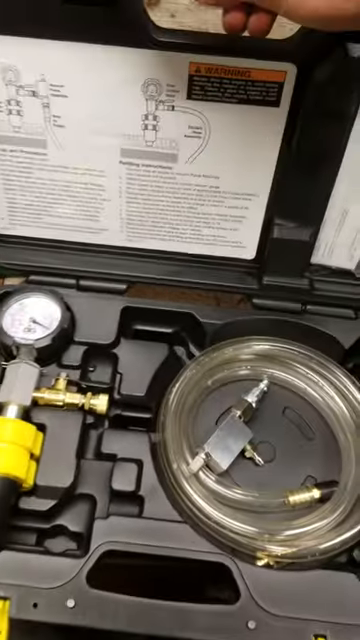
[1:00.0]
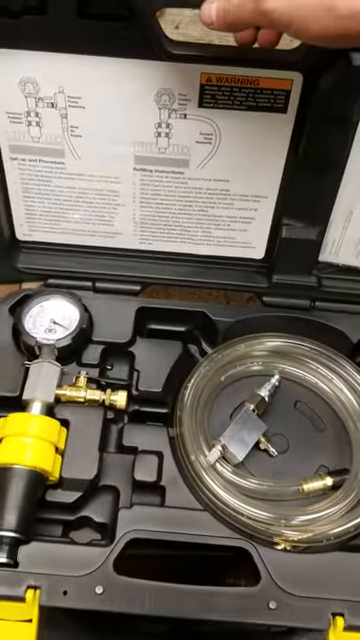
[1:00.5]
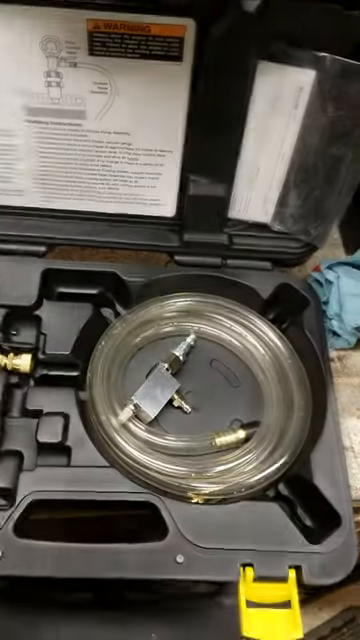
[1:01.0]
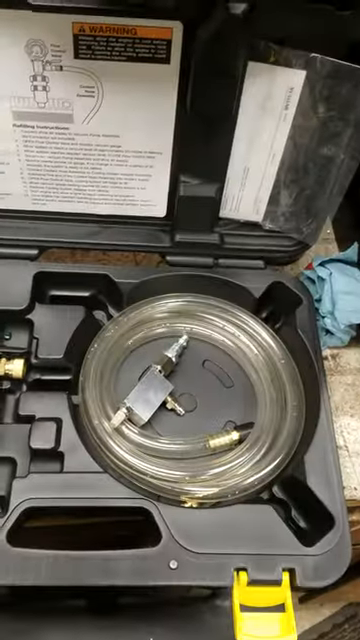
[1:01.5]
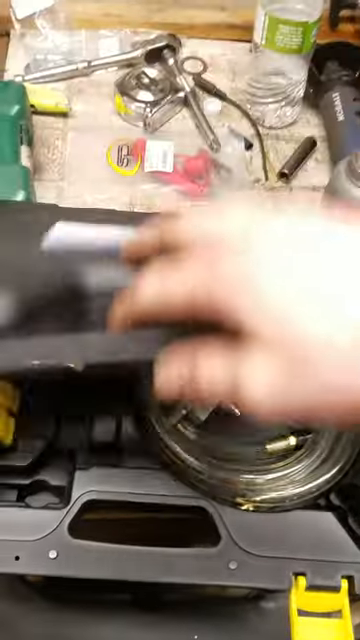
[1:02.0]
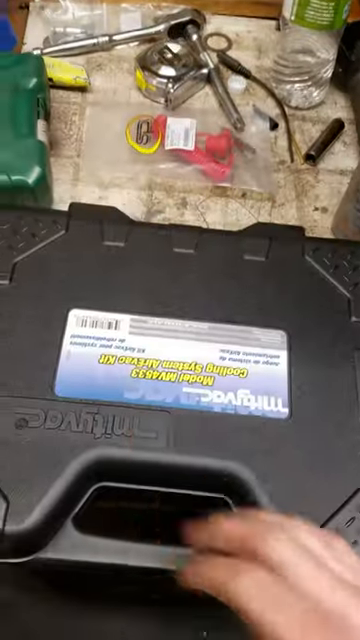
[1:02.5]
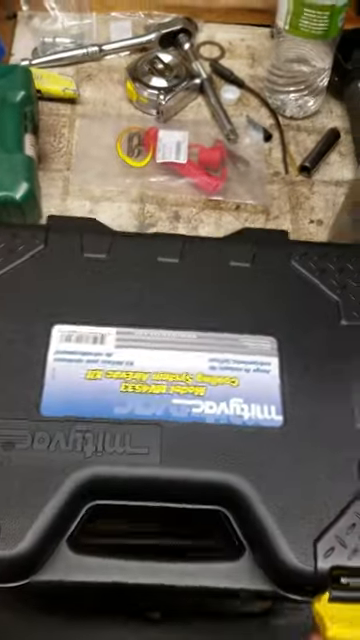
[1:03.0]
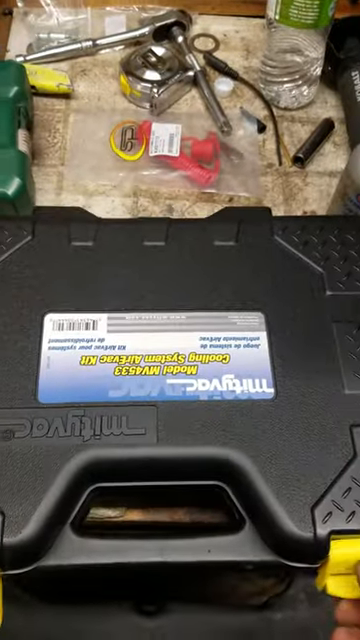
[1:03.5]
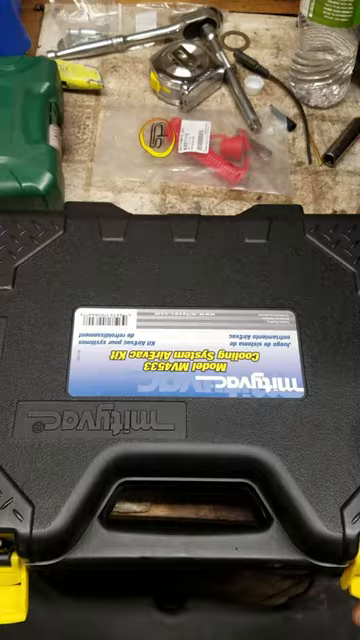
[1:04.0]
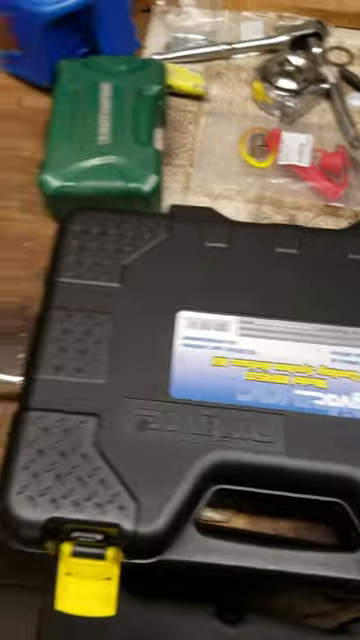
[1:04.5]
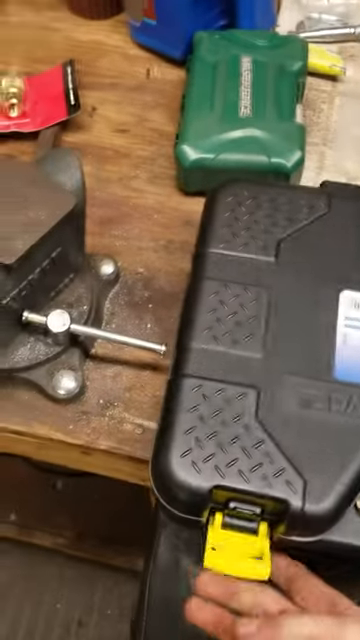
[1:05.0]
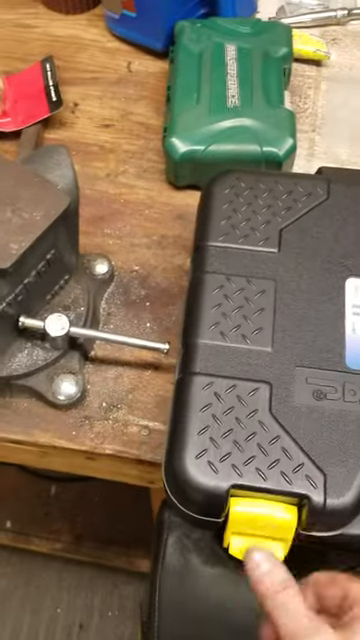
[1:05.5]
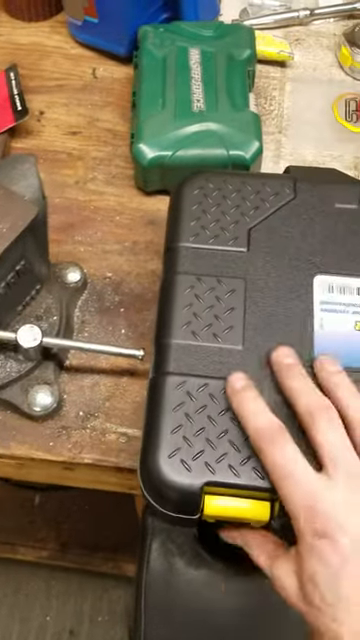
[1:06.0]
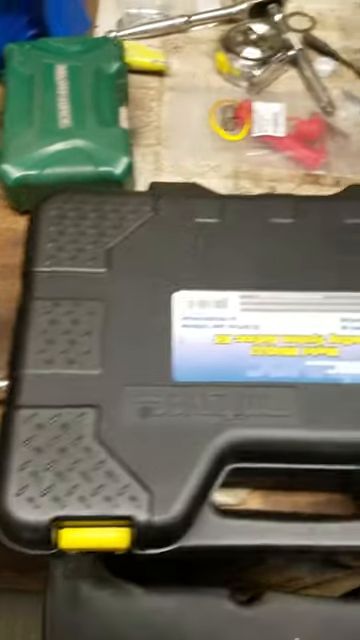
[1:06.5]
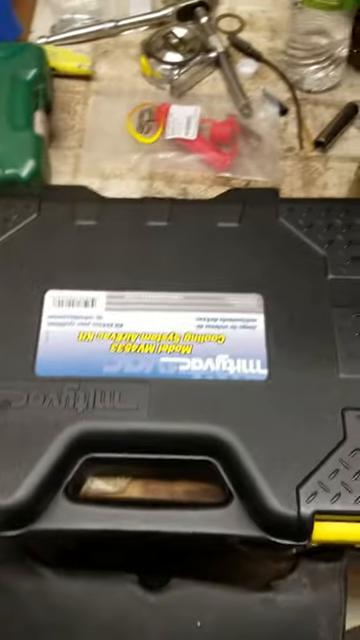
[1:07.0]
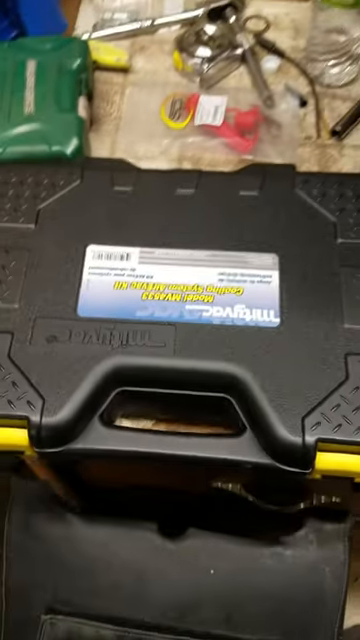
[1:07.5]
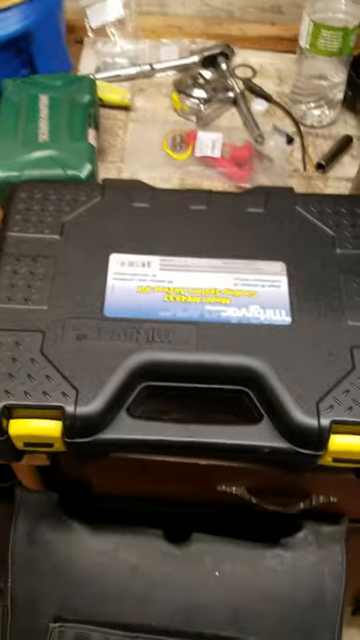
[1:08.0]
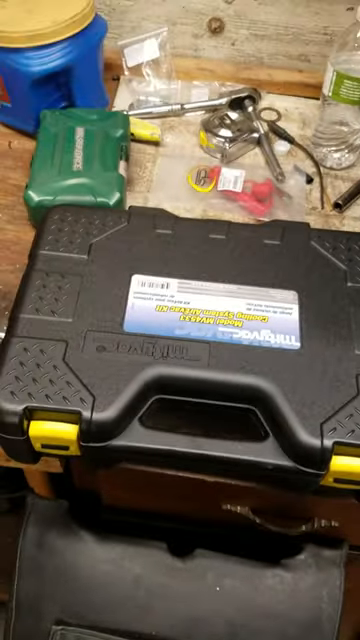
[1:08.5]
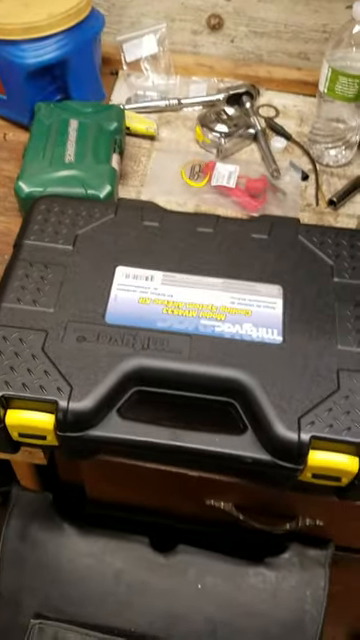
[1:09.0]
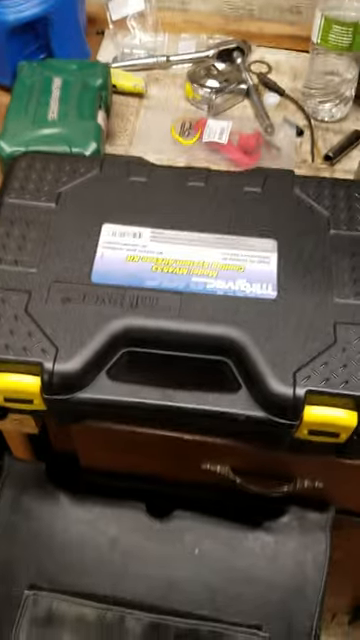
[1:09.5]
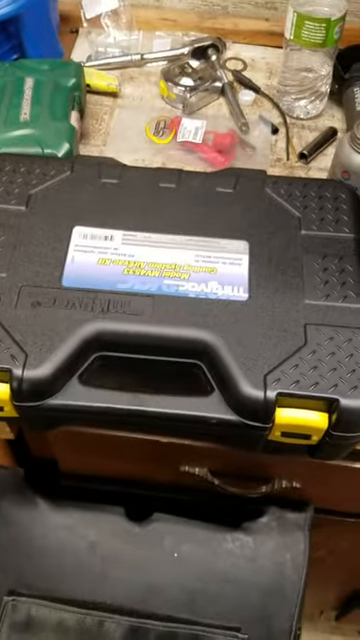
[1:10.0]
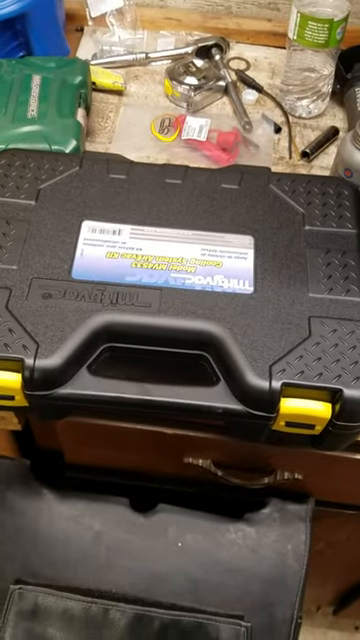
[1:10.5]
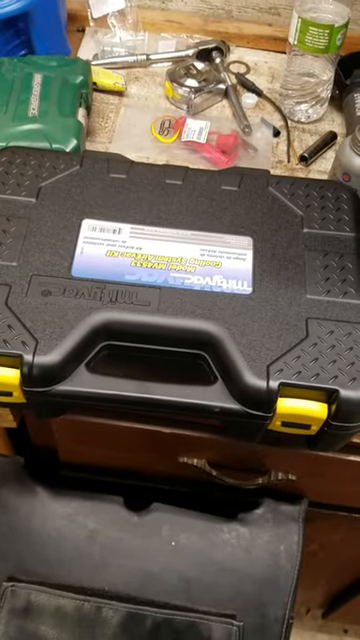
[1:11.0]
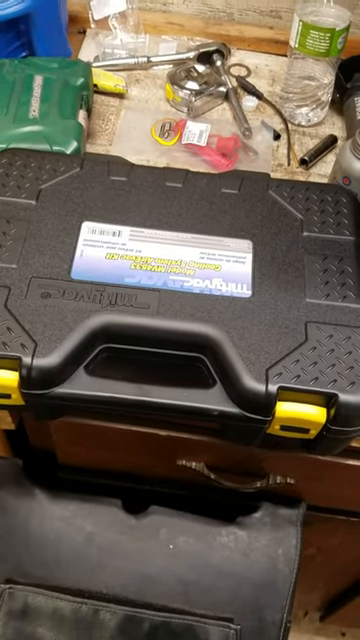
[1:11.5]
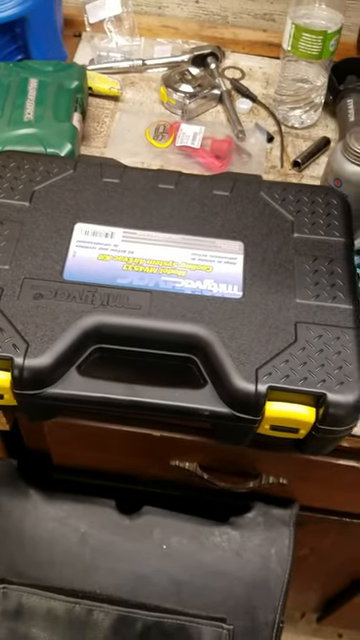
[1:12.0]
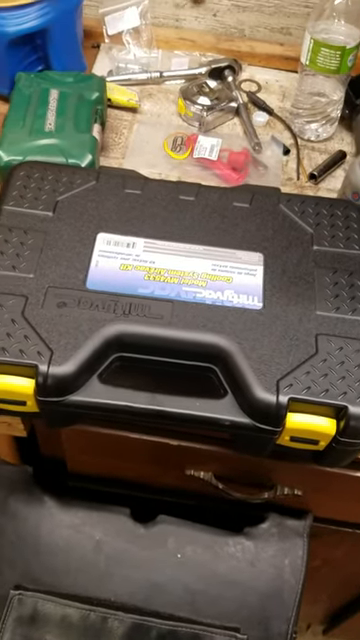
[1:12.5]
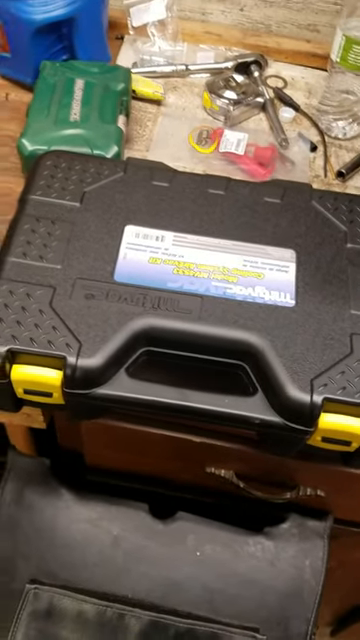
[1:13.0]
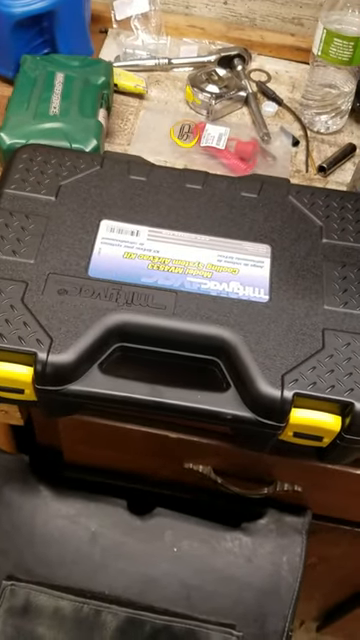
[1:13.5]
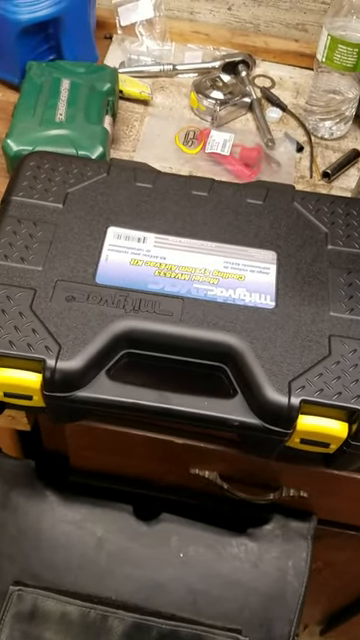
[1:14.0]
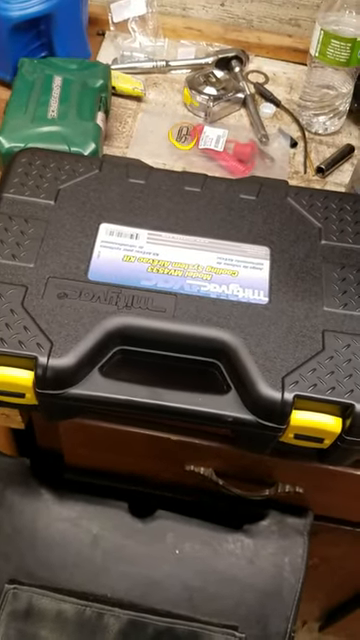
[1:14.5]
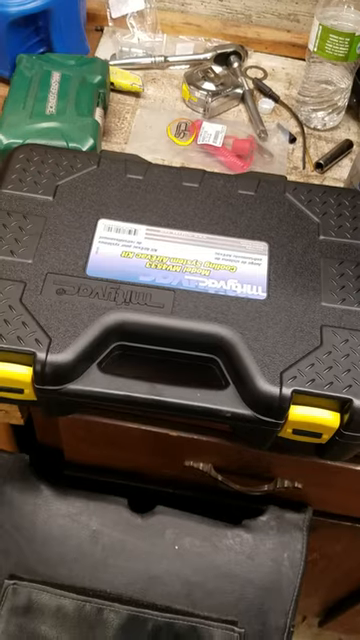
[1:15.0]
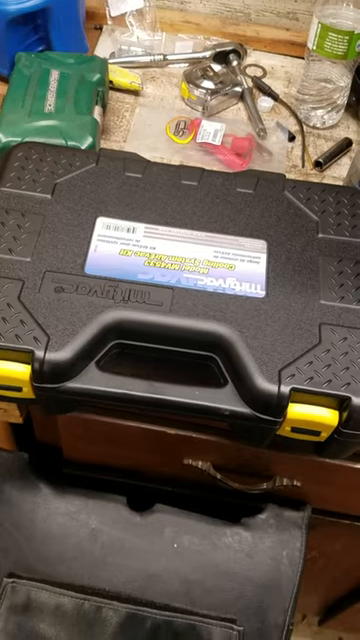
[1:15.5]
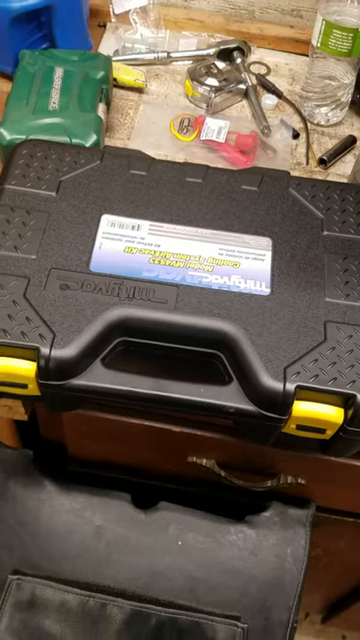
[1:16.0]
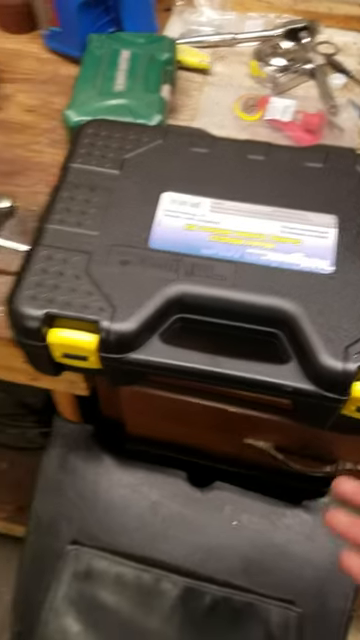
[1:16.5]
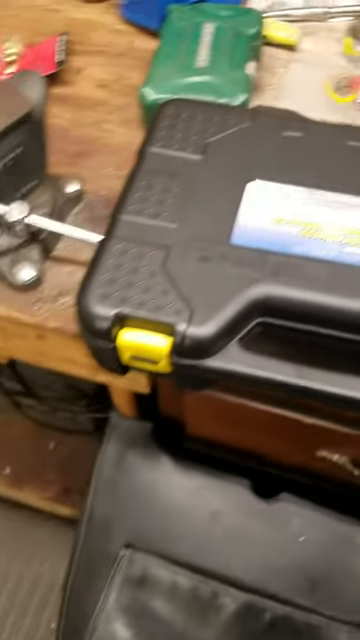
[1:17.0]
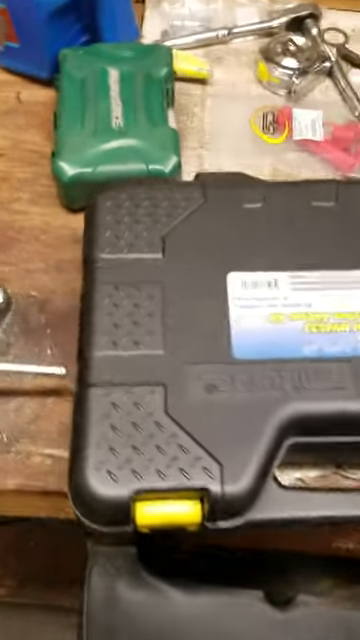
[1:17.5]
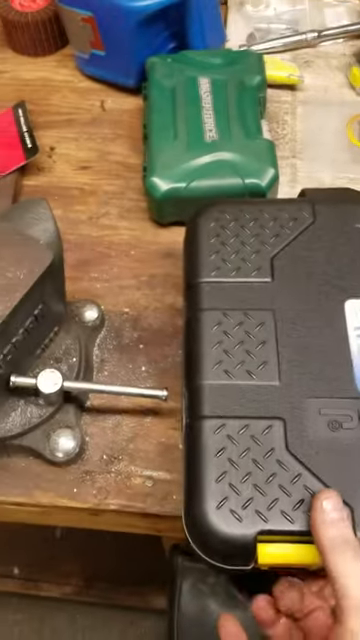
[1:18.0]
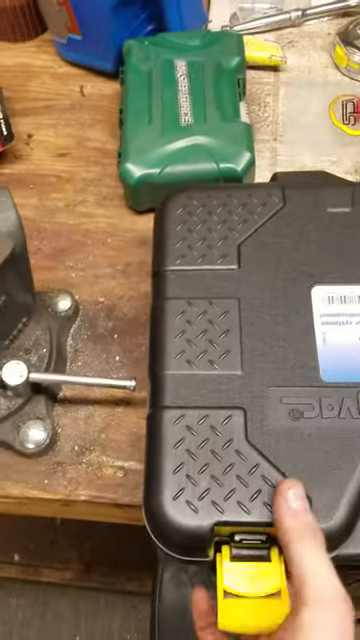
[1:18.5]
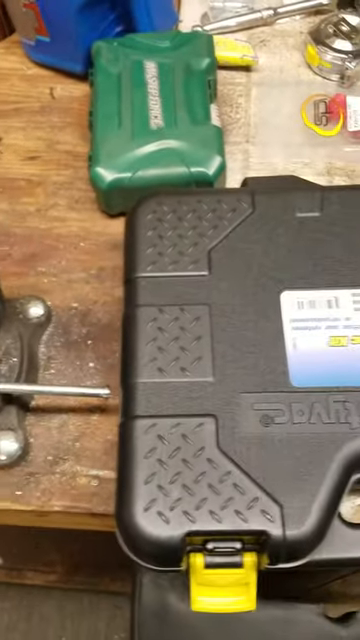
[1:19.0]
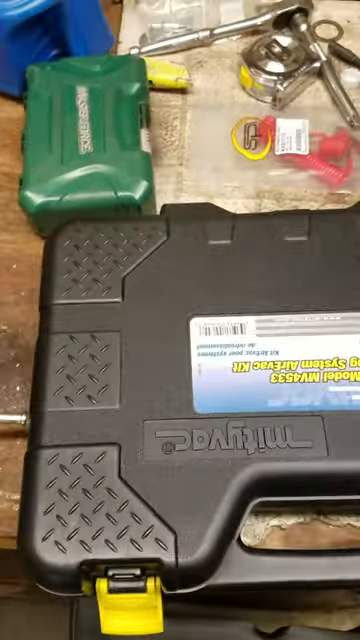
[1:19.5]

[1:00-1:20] A black plastic storage case that holds tools has been opened up and is on kind of a workbench area. The outside has some yellow words and some white words with information, but everything is upside down and it is impossible to tell whether it is in English. There are also yellow clips on the outside for locking the case, and the person shows locking the one on the left side, while the right one is already locked. The case is on a wooden table with a clamp off to the left, so it is maybe a tool bench.